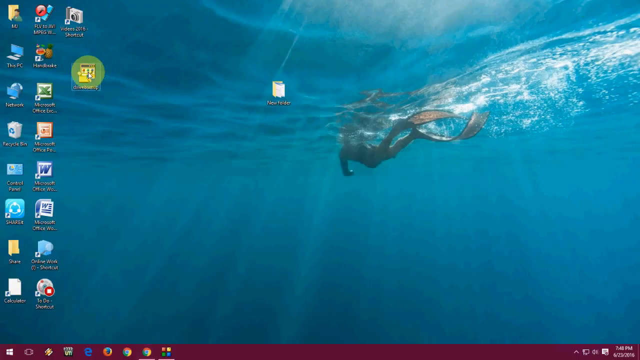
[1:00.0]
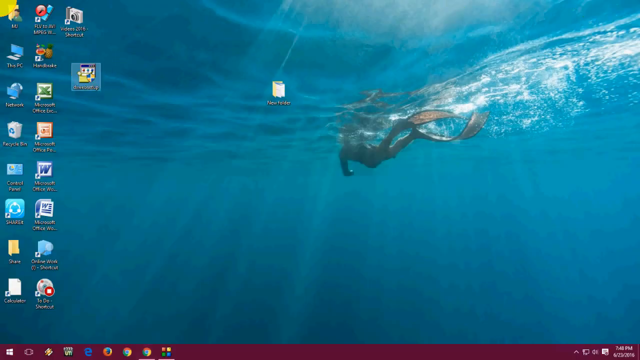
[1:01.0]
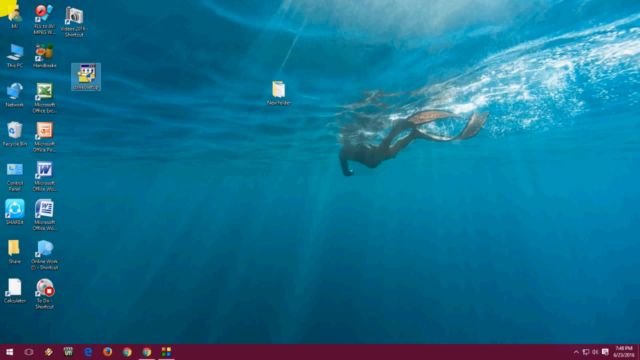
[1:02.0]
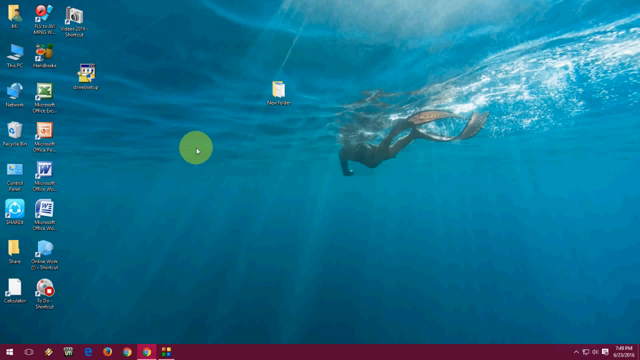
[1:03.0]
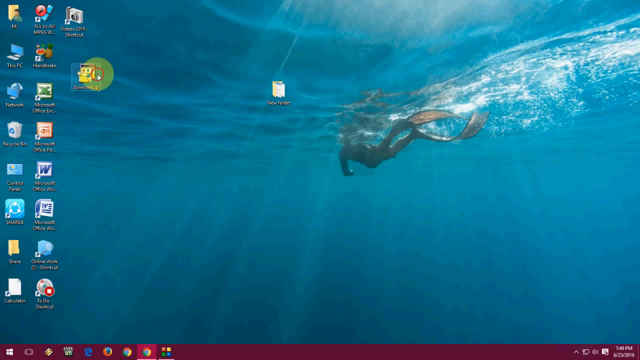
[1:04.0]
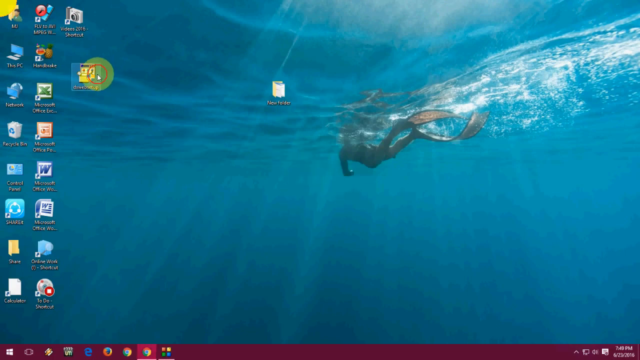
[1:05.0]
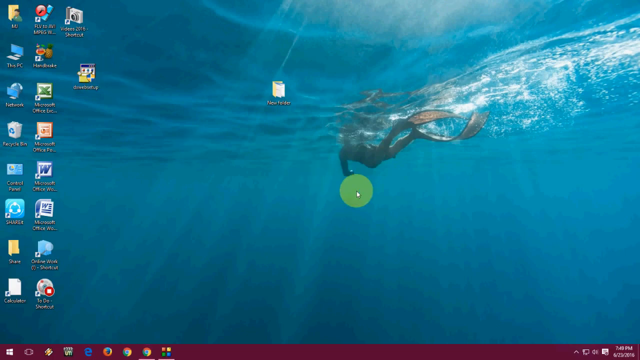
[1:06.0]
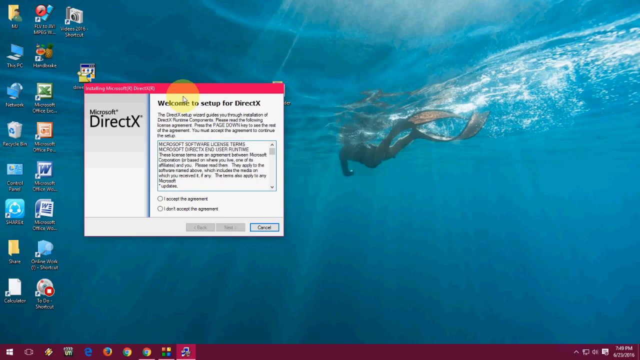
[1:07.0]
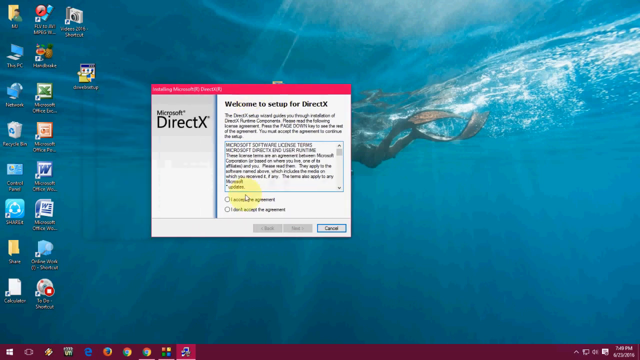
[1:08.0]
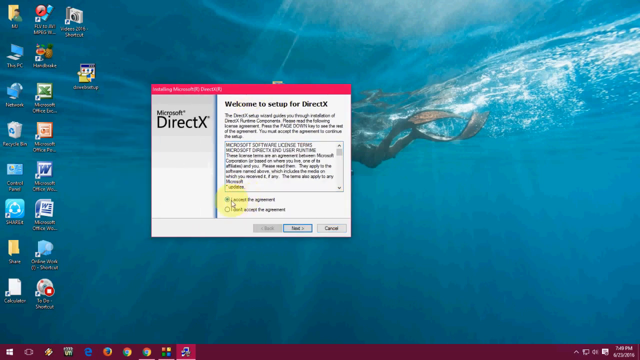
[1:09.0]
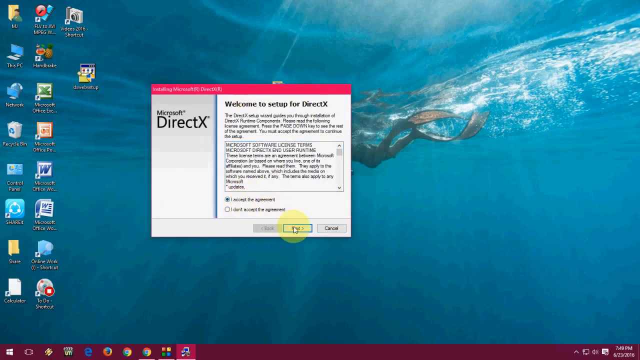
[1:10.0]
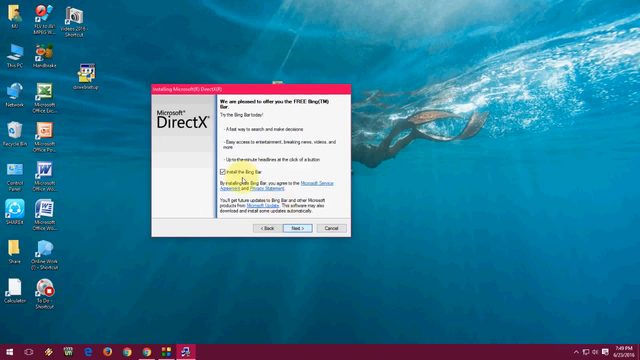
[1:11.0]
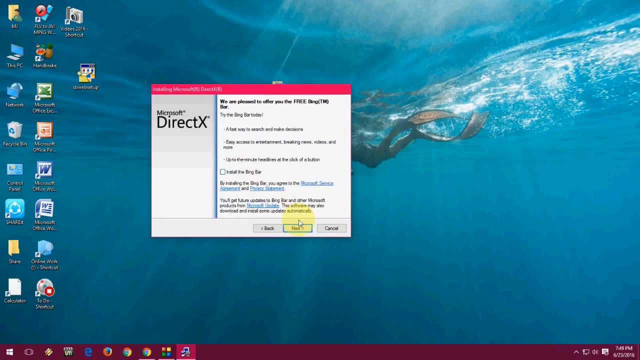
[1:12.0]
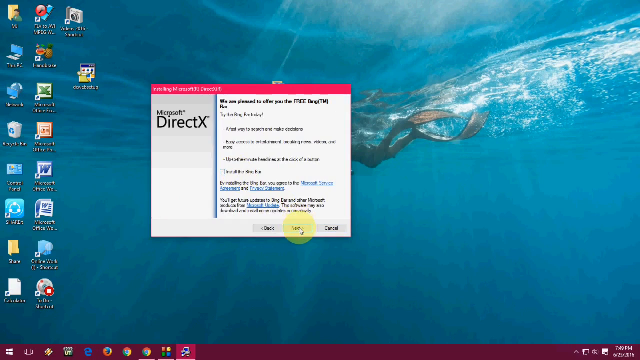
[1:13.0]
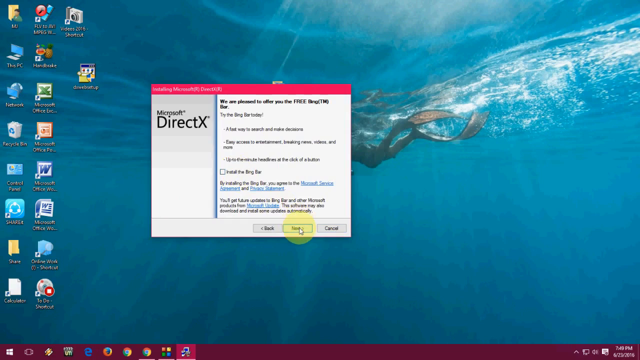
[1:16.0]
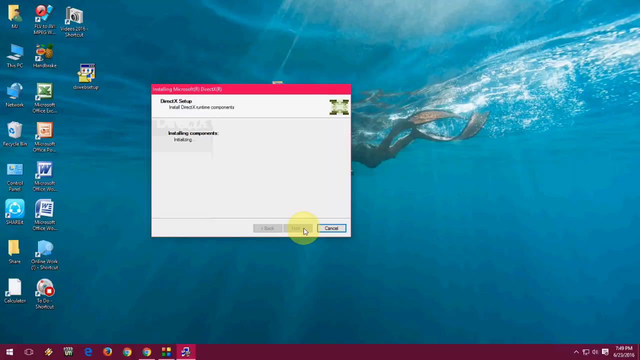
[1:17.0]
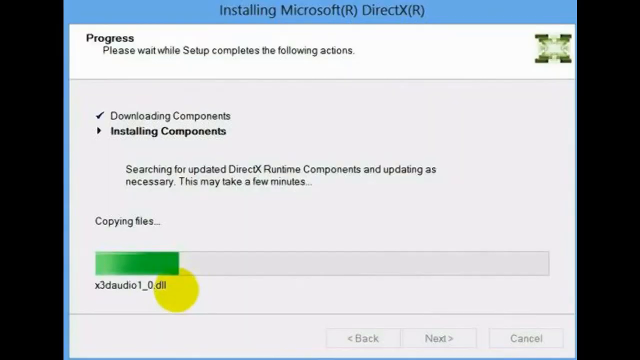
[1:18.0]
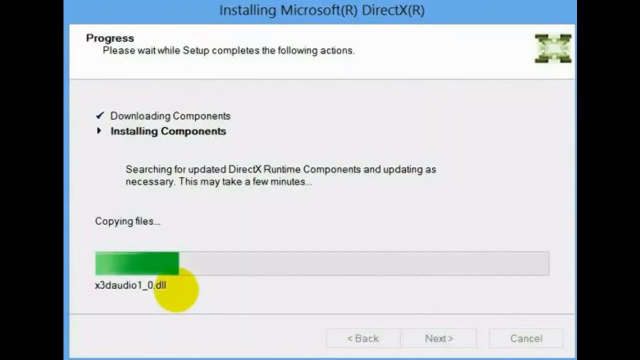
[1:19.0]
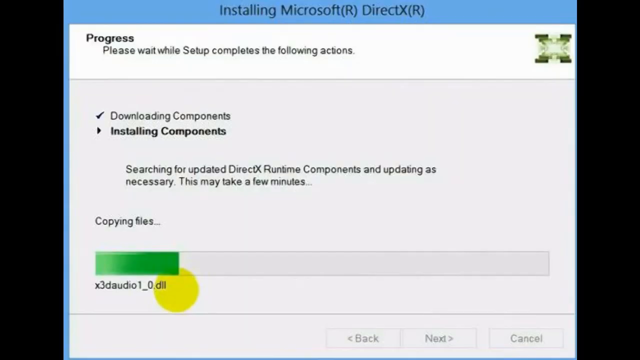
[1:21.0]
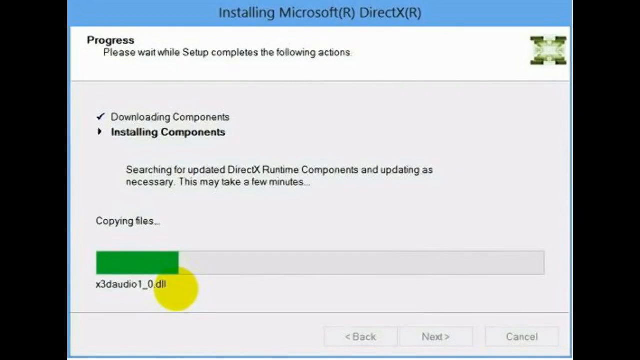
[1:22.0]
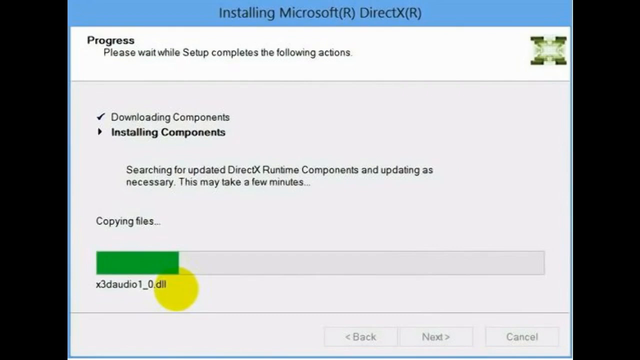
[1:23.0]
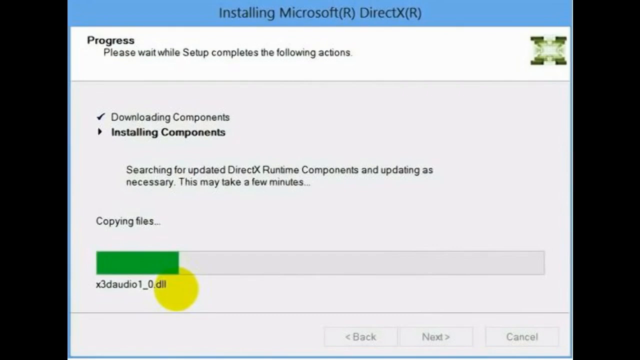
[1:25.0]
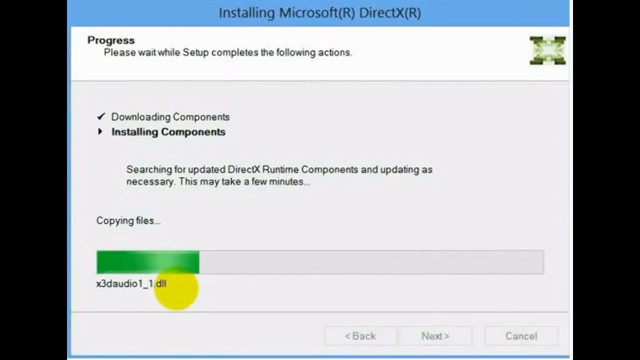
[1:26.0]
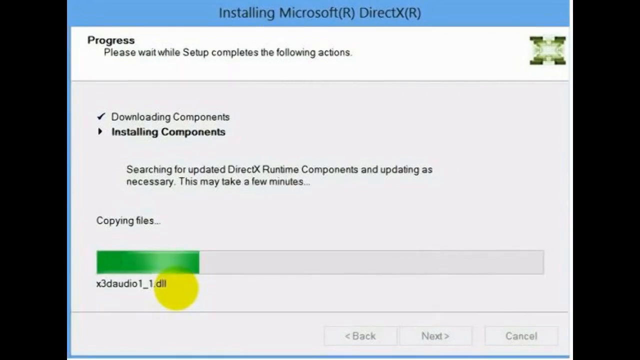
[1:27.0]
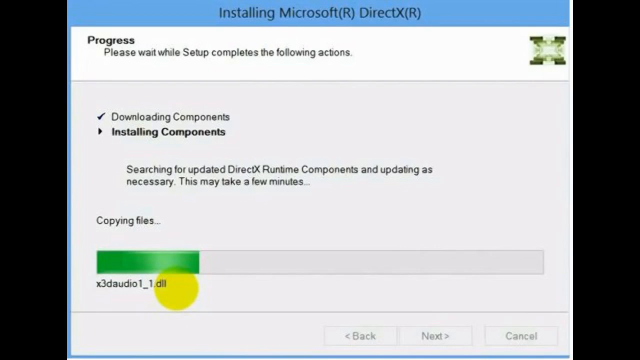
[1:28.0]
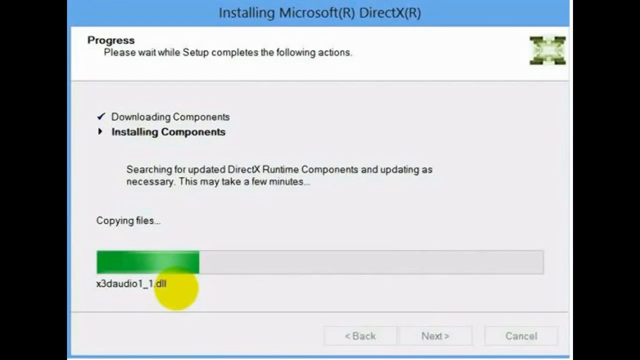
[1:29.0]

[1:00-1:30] A Windows desktop background shows an image of a snorkeler swimming underwater in blue water. There are a number of program icons on the left of the screen and one folder in the middle that says "New Folder". A white arrow cursor with a yellow transparent circle around it hovers over one of the program icons on the left, but what the icon says is not visible due to the poor quality of the video. It appears that the user has clicked on it a couple of times, but nothing is happening. A window then pops up, somewhat in the center of the screen, that says "Microsoft DirectX" and "welcome to set up for DirectX", with some software license terms, two options to accept or not accept, and back, next and cancel buttons at the bottom. The cursor selects "I accept the agreement", then next. The user unclicks an option that says "uninstall the Bing bar", moves to next again, and then okay. The screen then fills up with a very large text box that says "installing Microsoft R DirectX R", "Progress", "please wait while setup completes the following actions", "downloading components" with a tick, and an arrow next to "installing components". A progress bar towards the bottom has a green rectangle slowly filling it up.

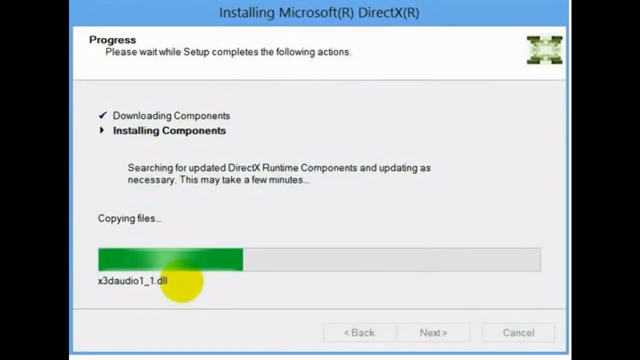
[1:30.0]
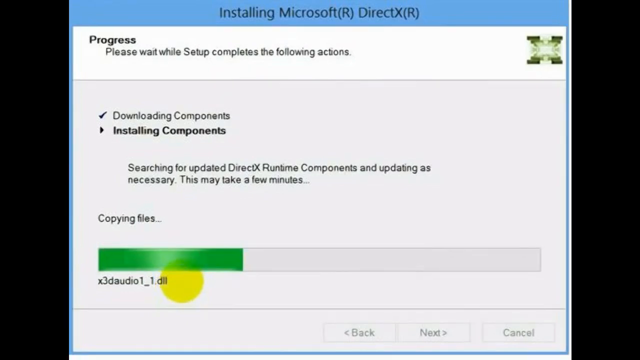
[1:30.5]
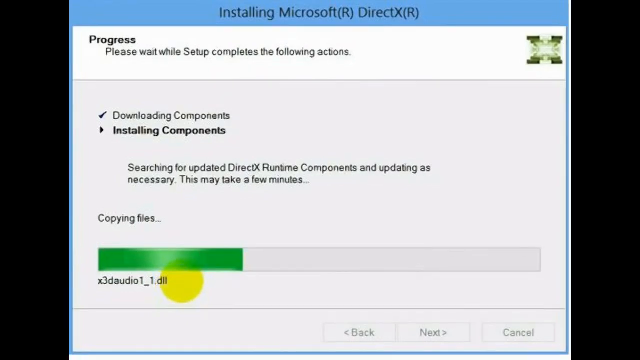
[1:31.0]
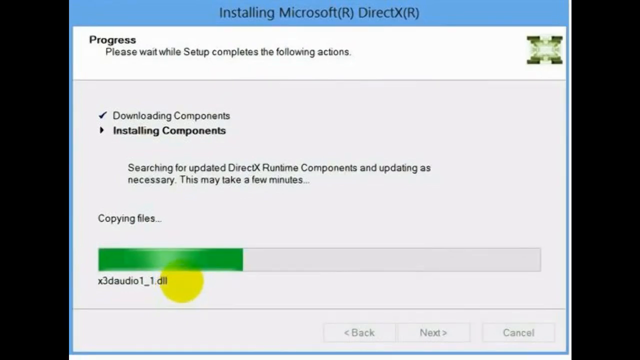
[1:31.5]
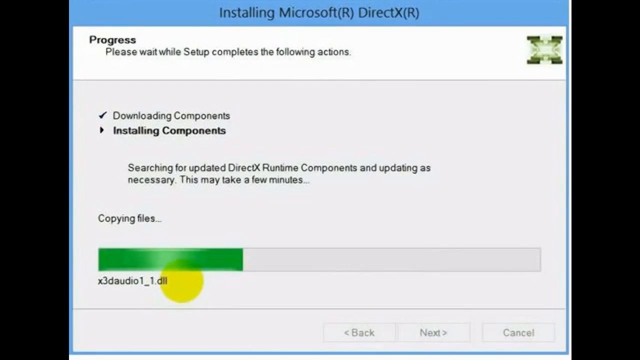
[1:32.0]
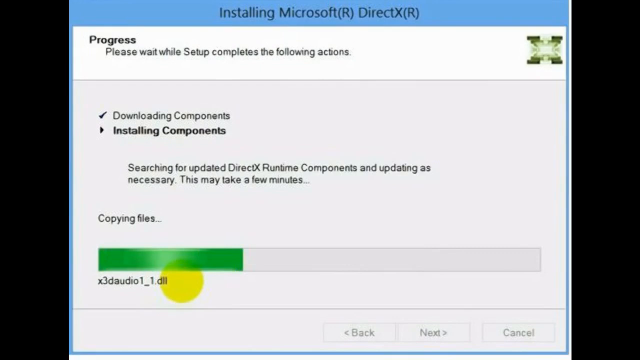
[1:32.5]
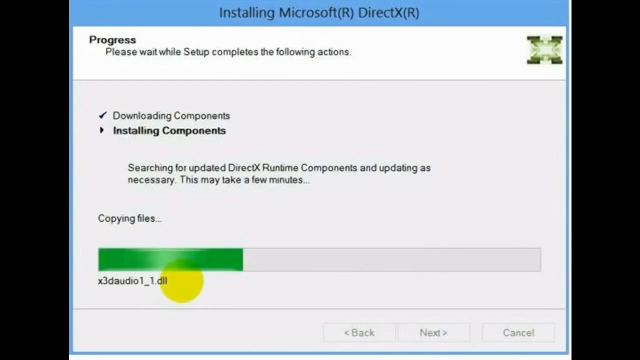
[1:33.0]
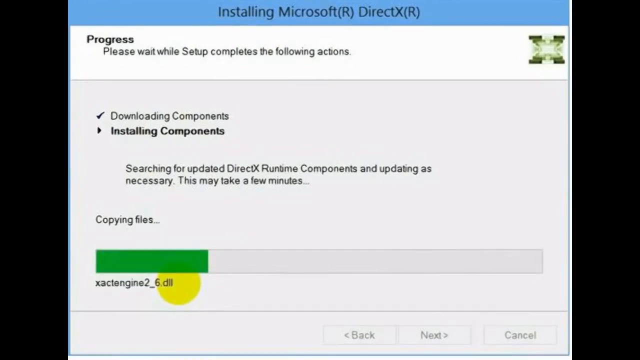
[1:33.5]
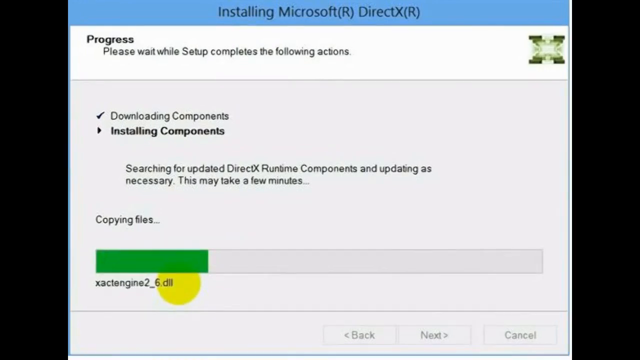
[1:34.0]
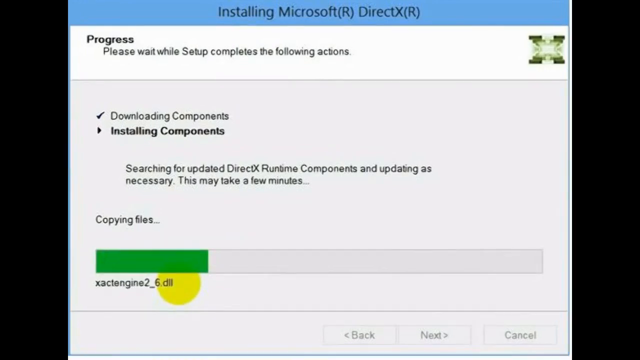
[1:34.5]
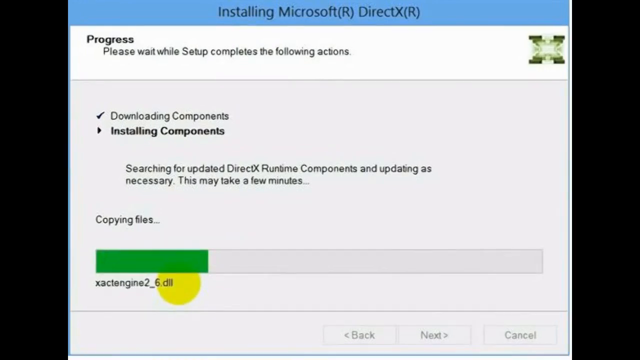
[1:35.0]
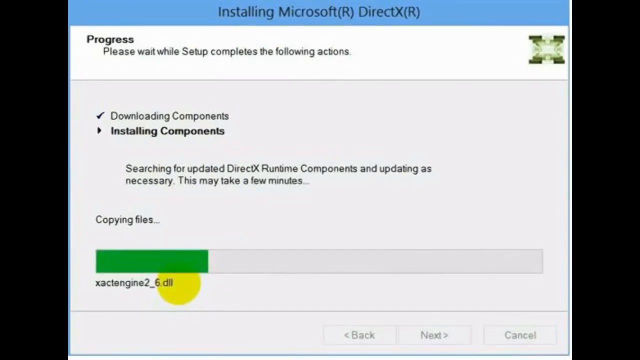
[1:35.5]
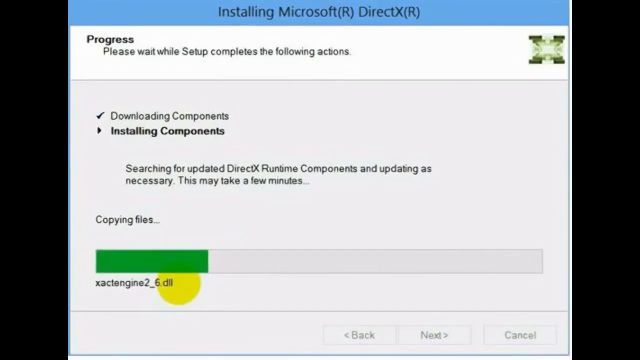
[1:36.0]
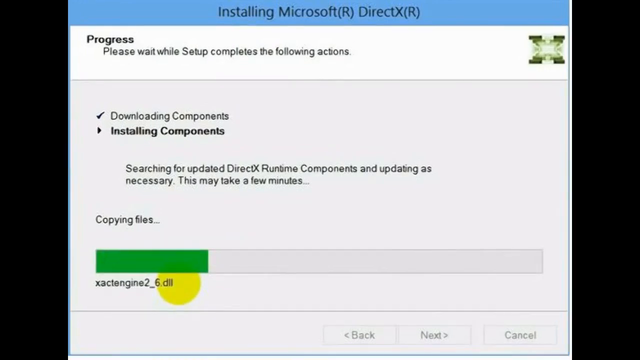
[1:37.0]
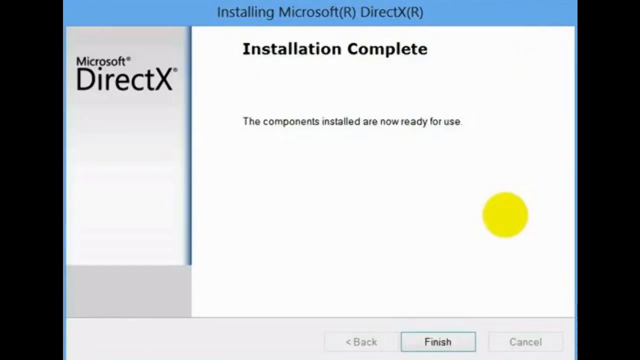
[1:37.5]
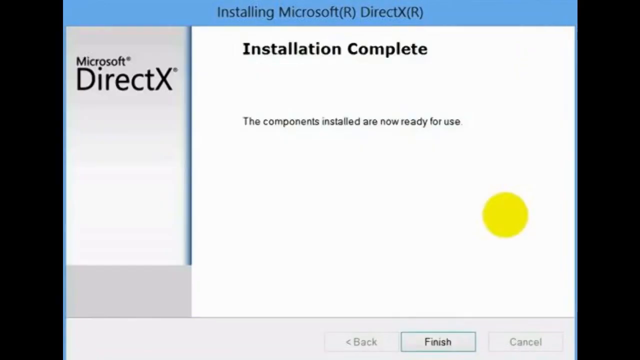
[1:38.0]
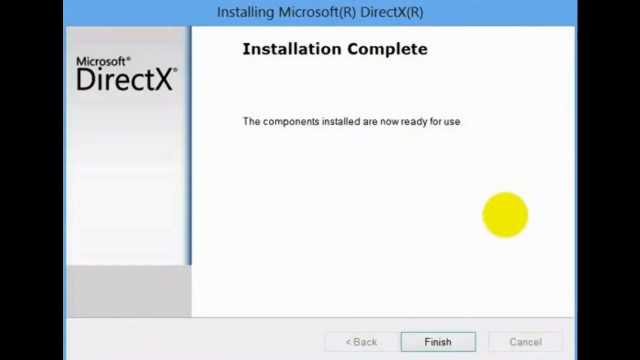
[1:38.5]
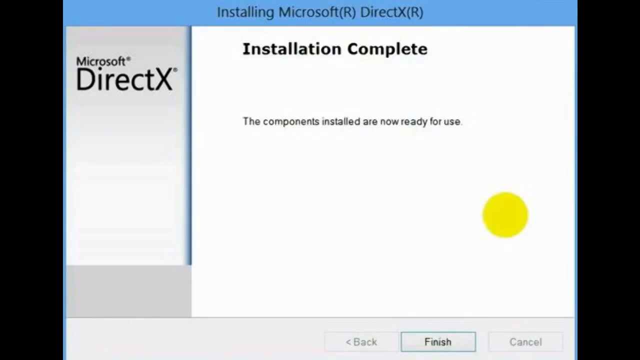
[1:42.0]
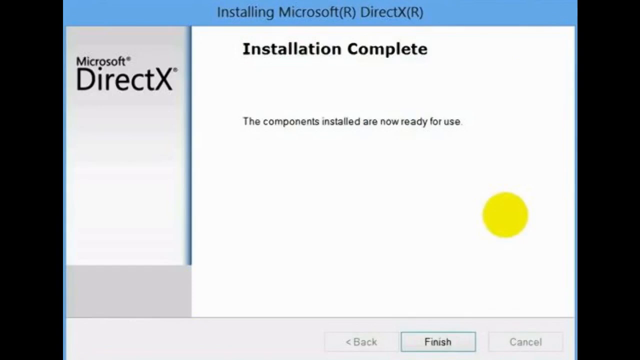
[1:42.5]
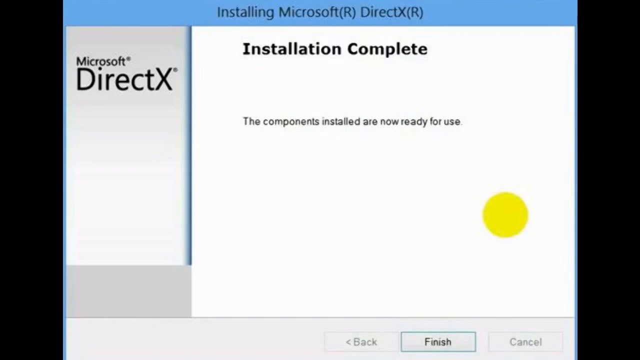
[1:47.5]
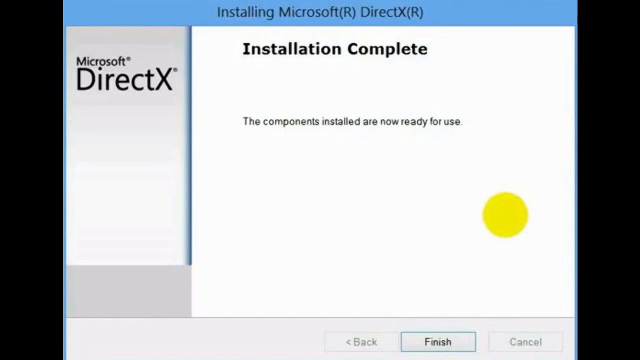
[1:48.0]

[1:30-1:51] A very large pop-up box takes up the majority of the screen, with a blue border and a black background on the right and left sides. The pop-up says "installing Microsoft R DirectX R", "progress, please wait while setup completes the following actions", then "downloading components", "installing components" and "copying files", with a progress bar along the bottom. In the bottom right-hand corner are three buttons saying back, next and cancel. A green bar fills the progress bar, and a yellow circle marks where the cursor is. The green progress bar appears to be only a quarter of the way full when the page suddenly changes to one that says "installation complete" and "The components installed are now ready for use", with a highlighted option at the bottom that says "finish". The background of the pop-up is apparently white, and on the left, on a gray gradient background, "Microsoft DirectX" is written in black. The yellow transparent cursor is in the bottom right-hand corner.